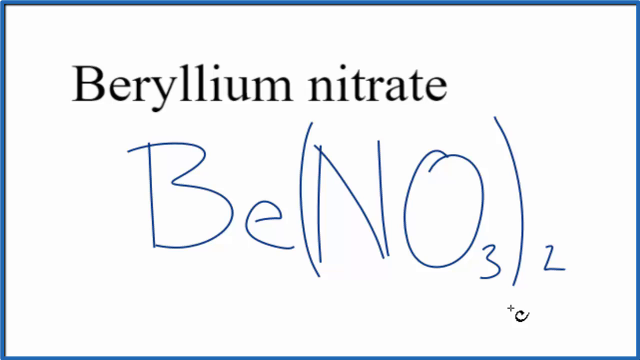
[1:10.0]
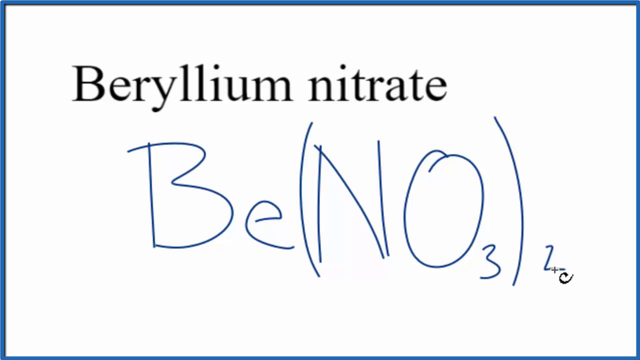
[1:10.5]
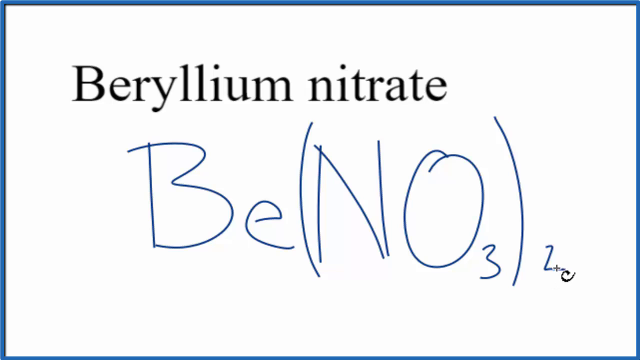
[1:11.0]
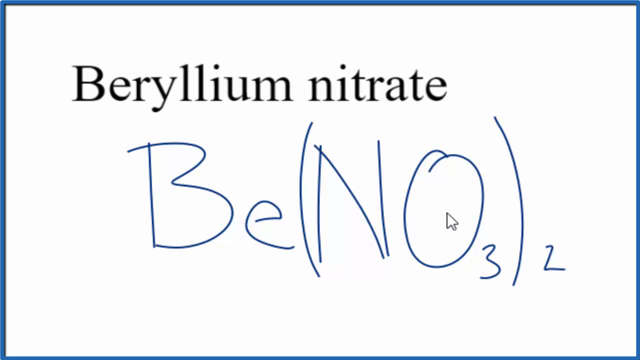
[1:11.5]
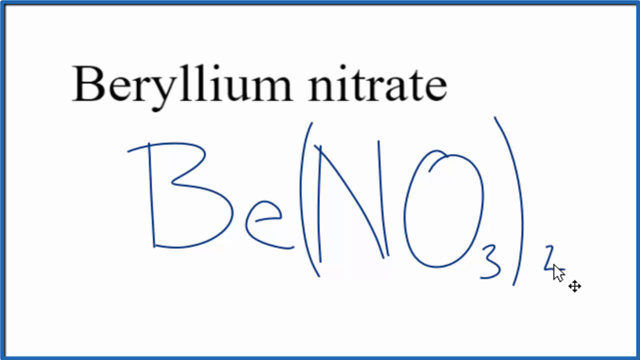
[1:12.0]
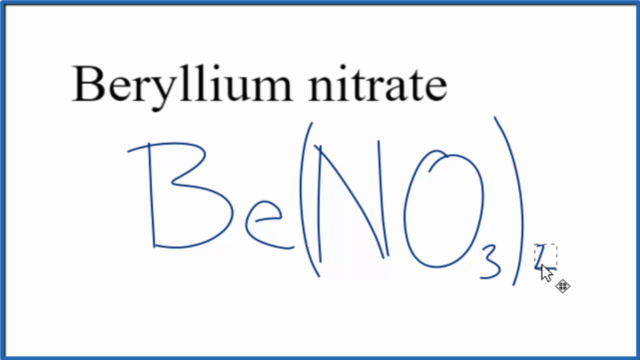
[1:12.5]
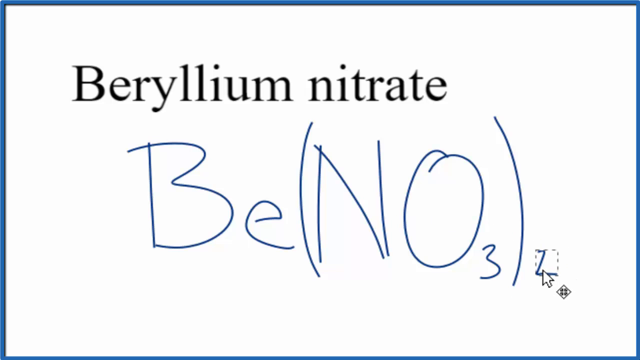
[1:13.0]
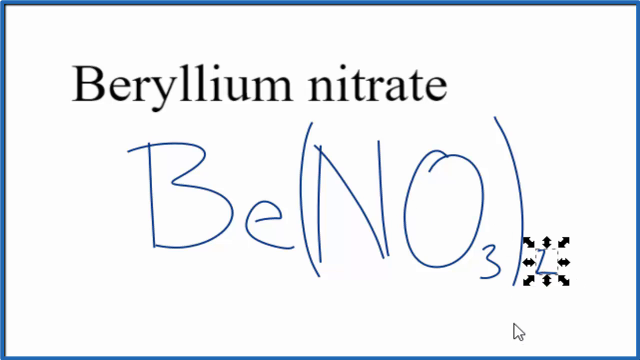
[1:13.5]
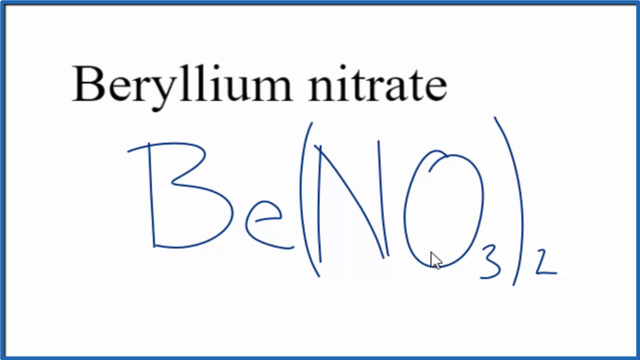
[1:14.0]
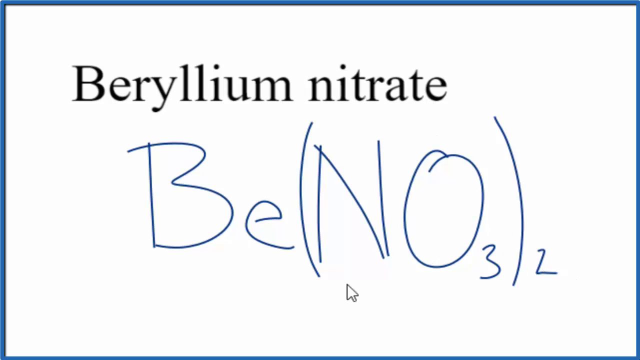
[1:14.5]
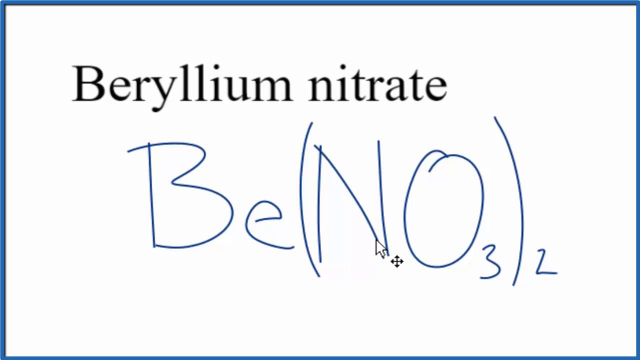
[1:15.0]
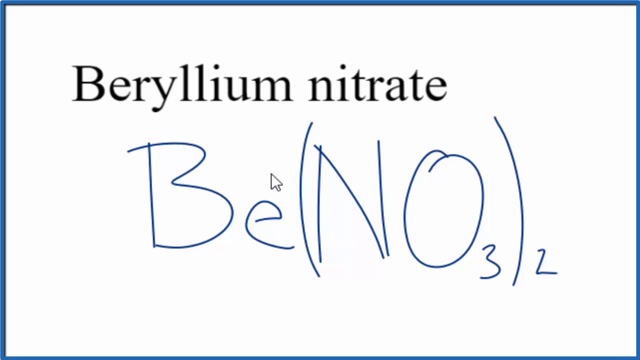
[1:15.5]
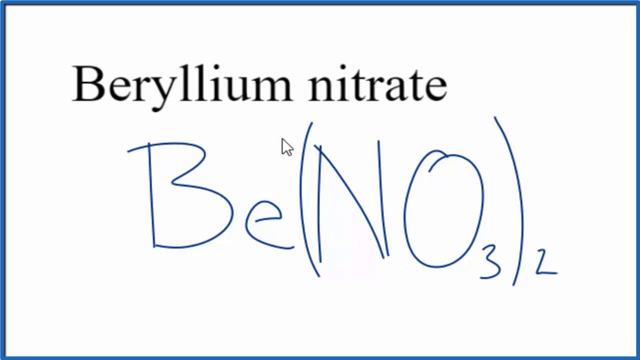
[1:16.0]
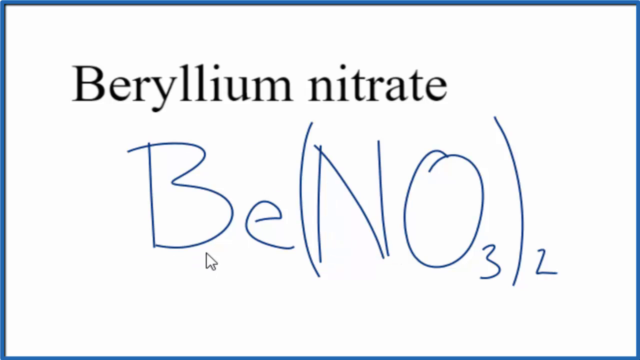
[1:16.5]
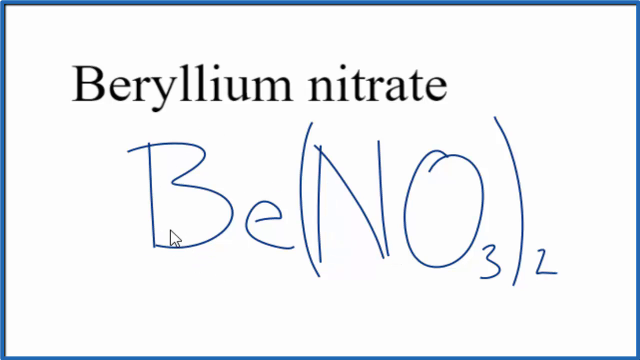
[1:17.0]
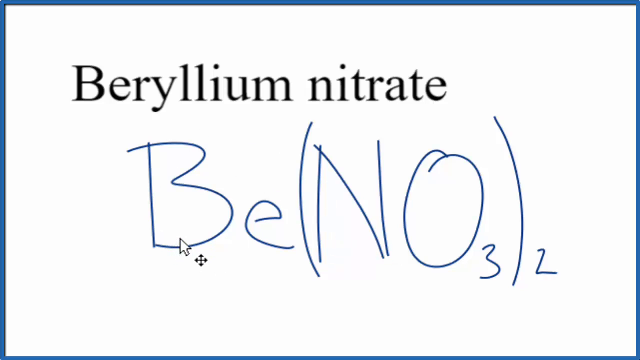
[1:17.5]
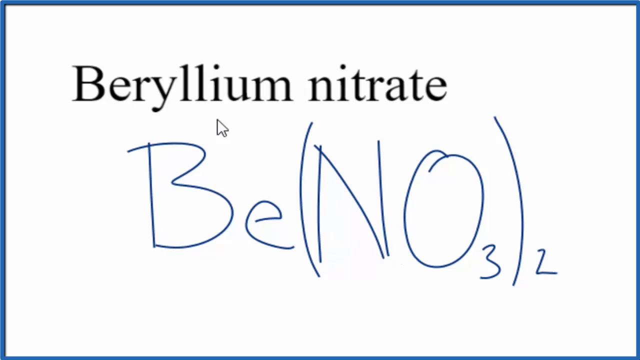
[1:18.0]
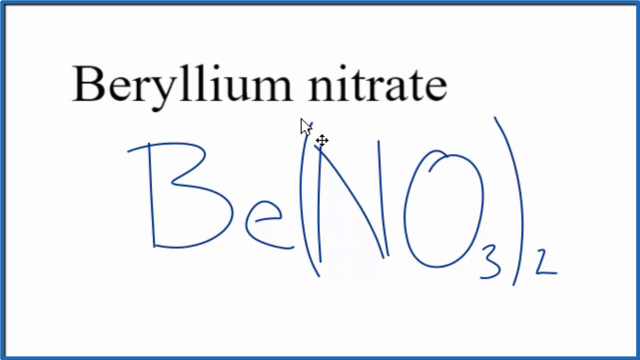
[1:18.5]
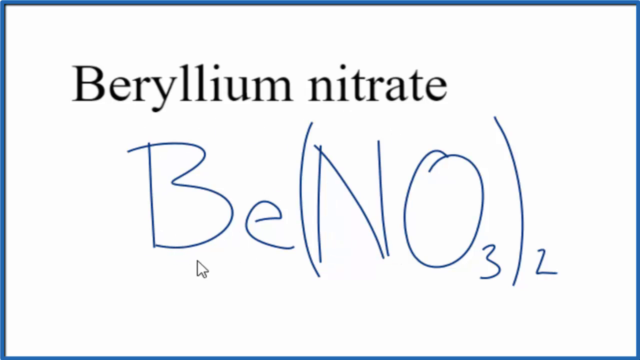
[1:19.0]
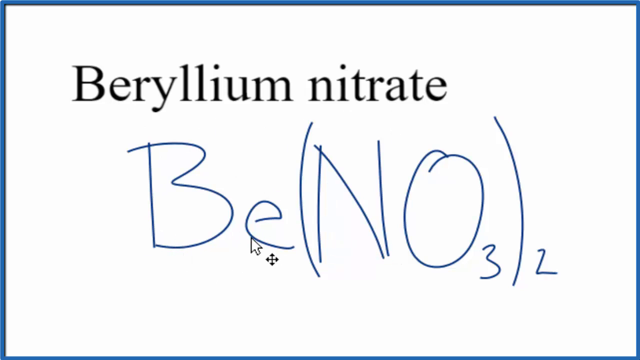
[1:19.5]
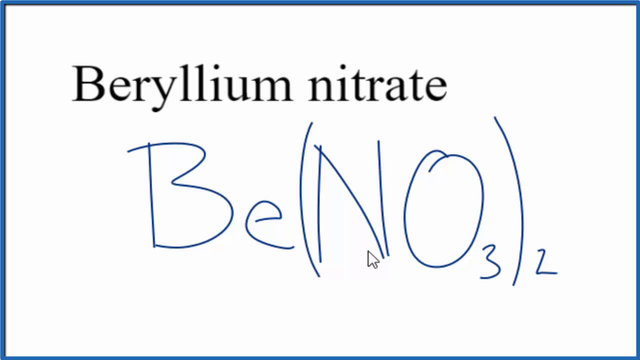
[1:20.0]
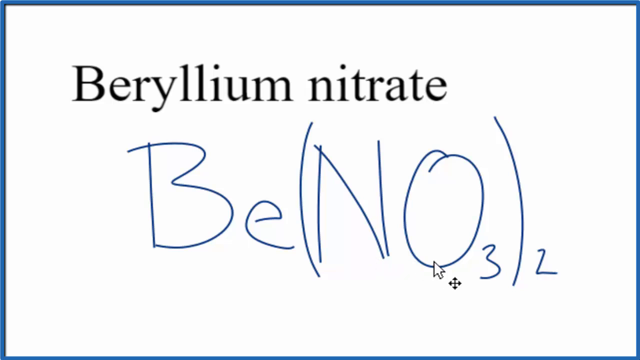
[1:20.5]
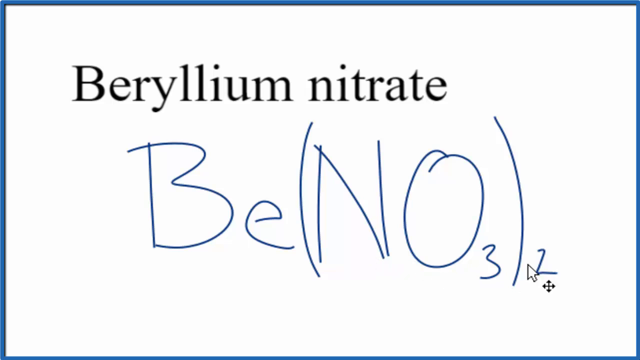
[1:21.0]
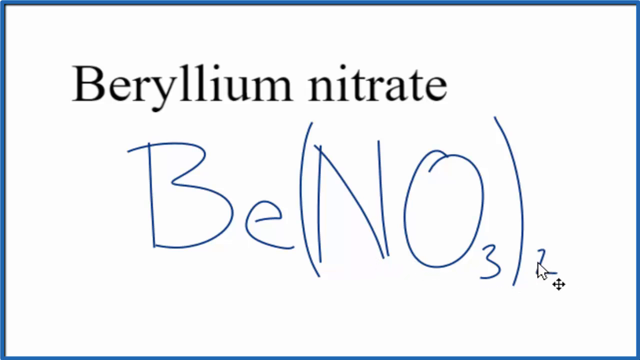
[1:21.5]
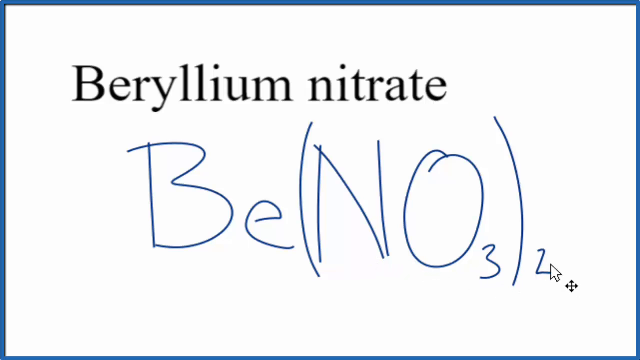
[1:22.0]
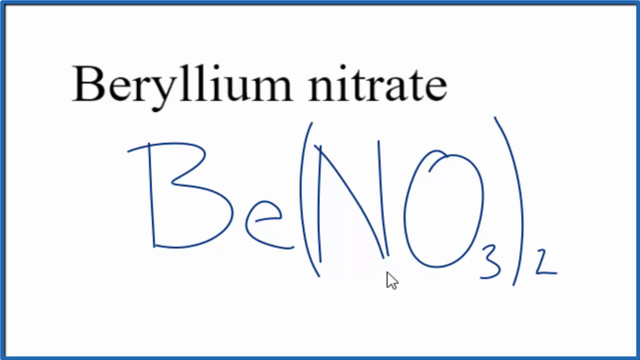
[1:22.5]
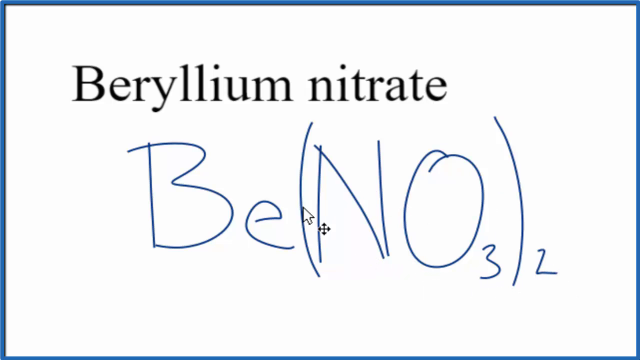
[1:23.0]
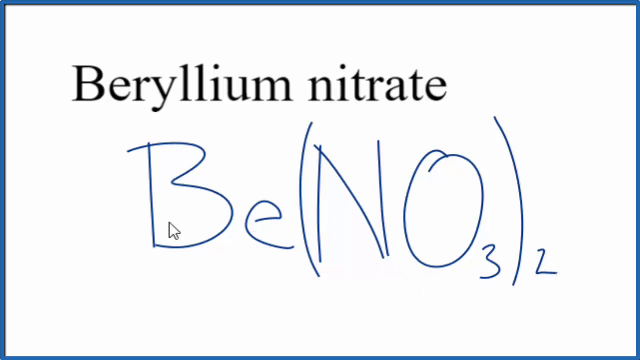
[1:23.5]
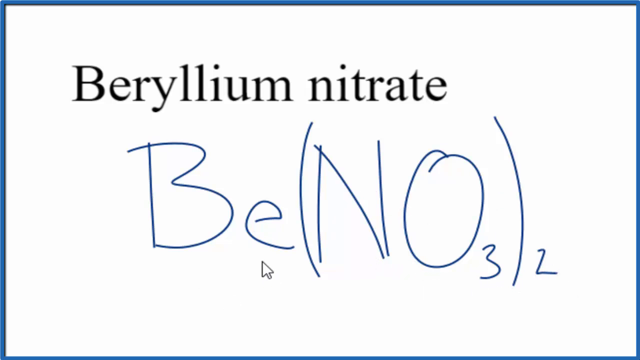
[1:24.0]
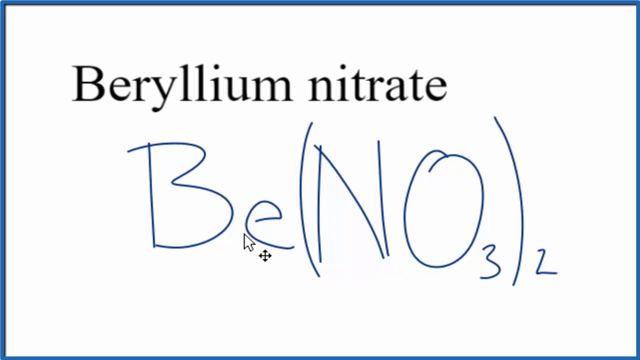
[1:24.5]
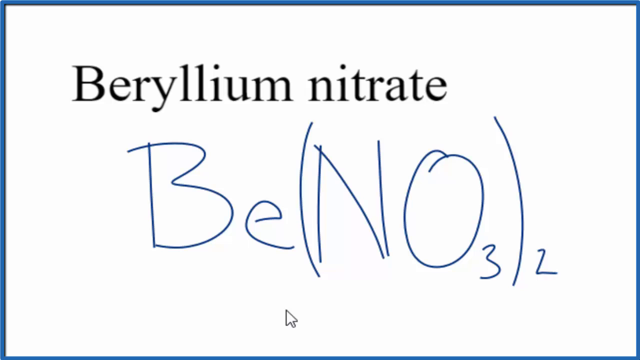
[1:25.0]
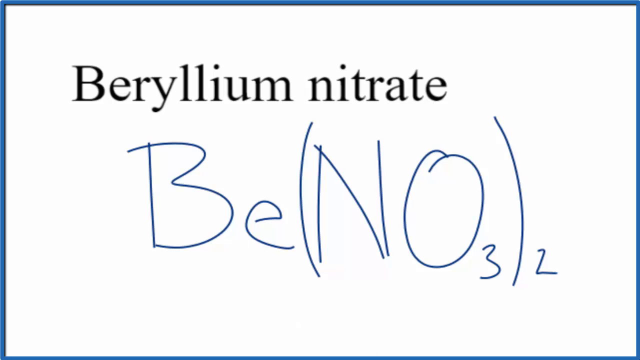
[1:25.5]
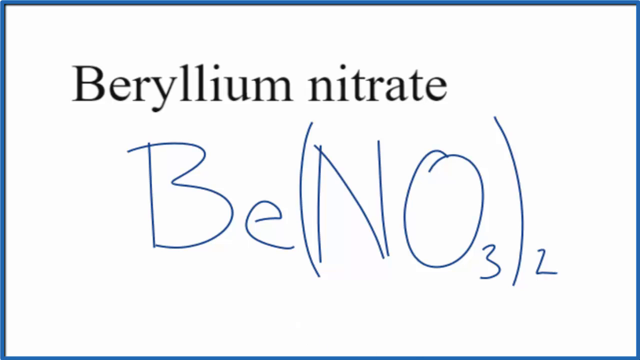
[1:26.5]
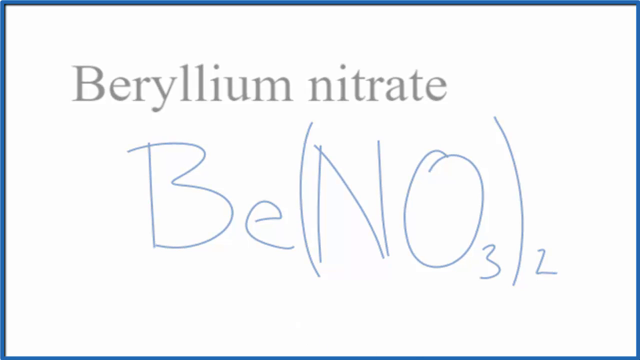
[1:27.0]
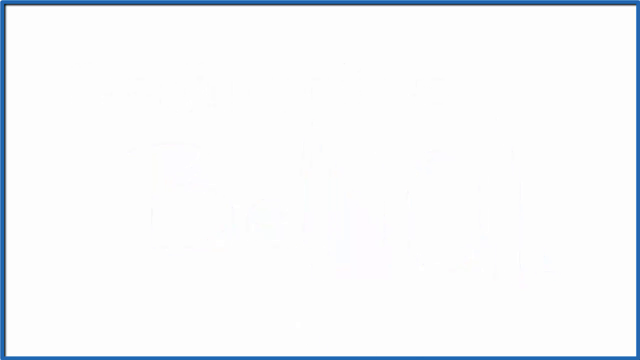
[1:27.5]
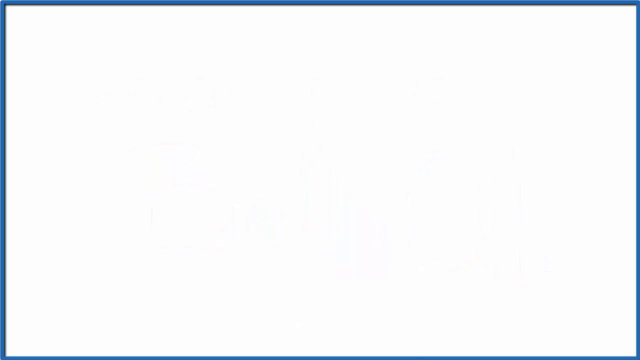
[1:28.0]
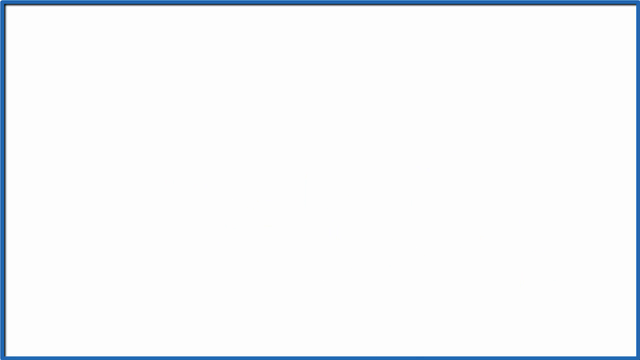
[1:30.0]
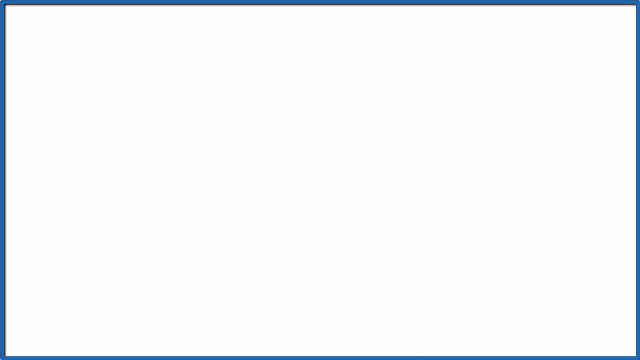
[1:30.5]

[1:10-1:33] The screen is white with a gray-black frame at the bottom, and the words "beryllium nitrate" appear. A cursor somewhat shaped like a C or a comet draws a wavy line under "beryllium" and a straight line under "nitrate." It writes a capital B and a little e, then circles the last three letters of "nitrate," A-T-E. It bounces around for a moment, then writes a capital N and a capital O, with a three at the bottom of the O, apparently indicating the third power, and a one and a dash at the top of the O. It circles "nitrate" once more and waves over the N and O. It draws lines underneath the B-E and the N-O, then bounces and hovers around, shaking a bit. It puts a 2+ over the E, hovers over the O for a moment, circles the N-O once more, and waves over the entire equation. It makes several motions over the 2+ above the E. It adds a two at the end of the equation and erases the one dash. It then puts parentheses around the N-O for the three and moves the two at the end to the bottom. The cursor hovers over the equation and waves over it several times.